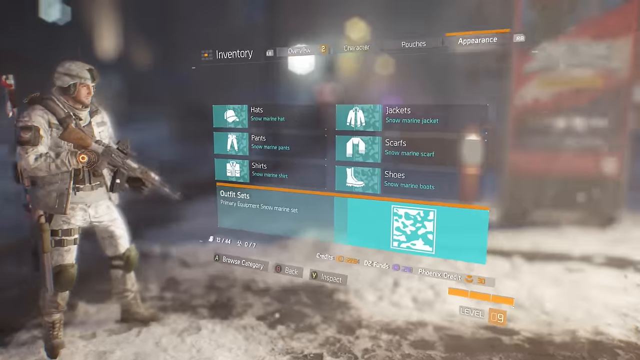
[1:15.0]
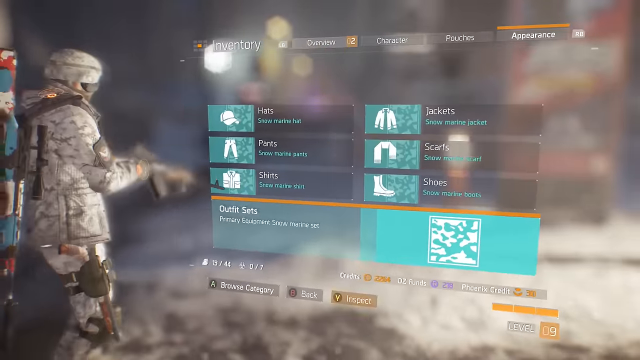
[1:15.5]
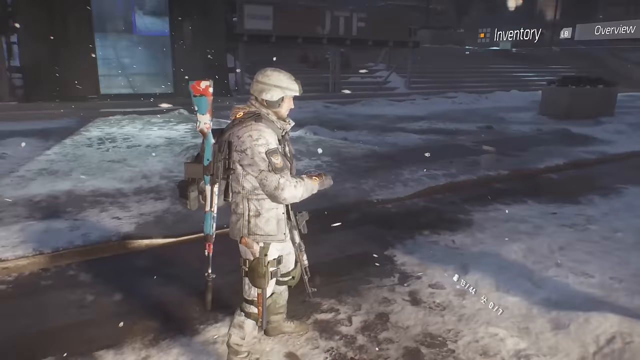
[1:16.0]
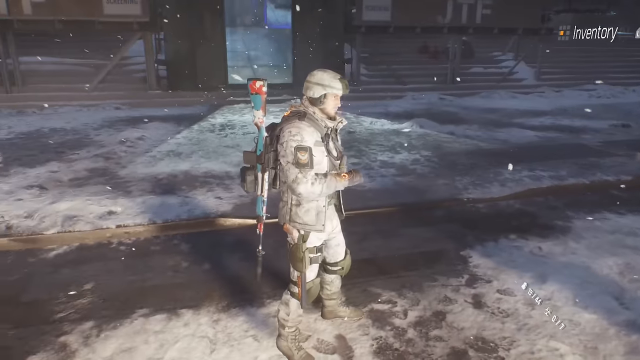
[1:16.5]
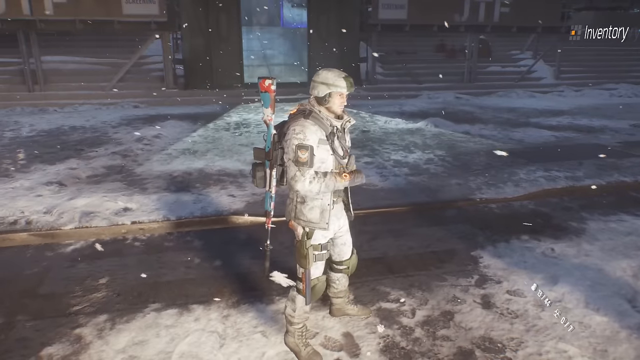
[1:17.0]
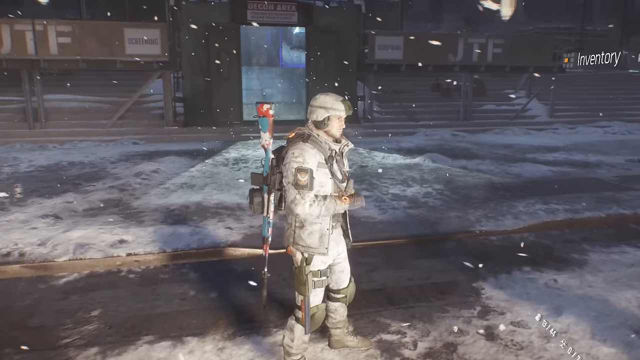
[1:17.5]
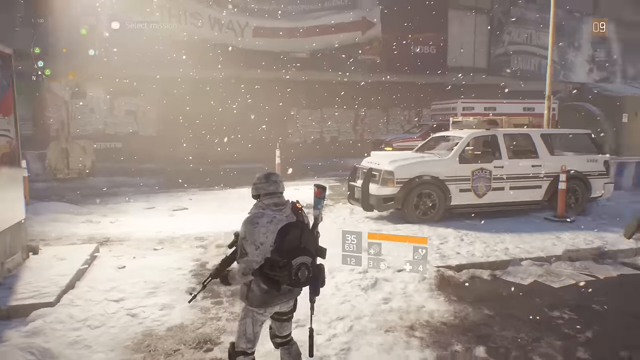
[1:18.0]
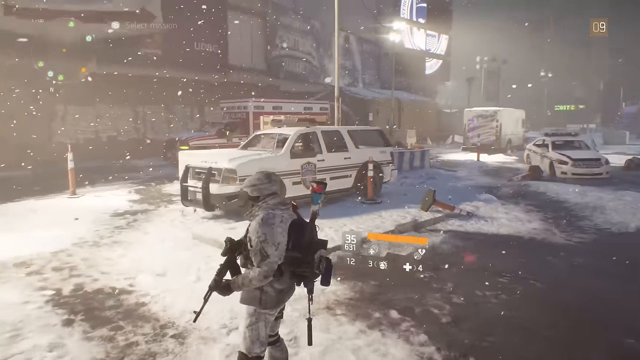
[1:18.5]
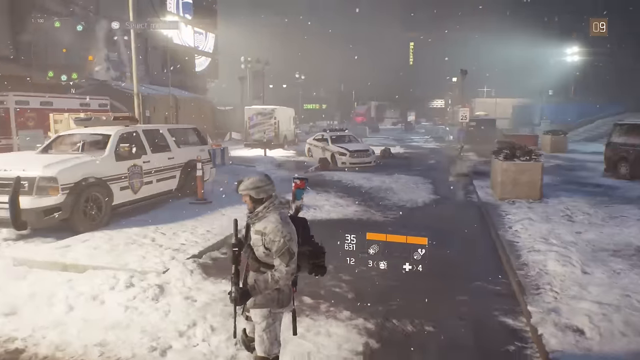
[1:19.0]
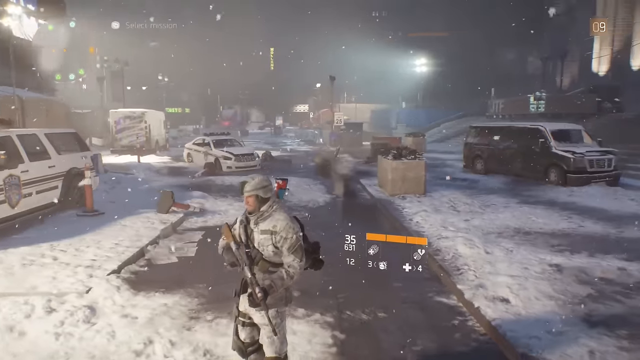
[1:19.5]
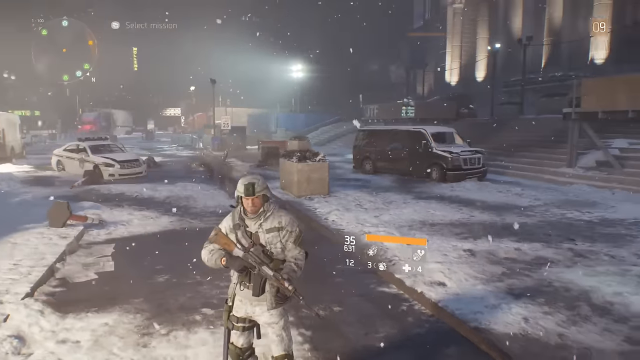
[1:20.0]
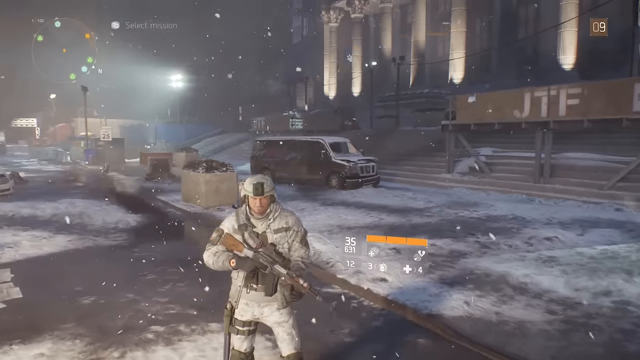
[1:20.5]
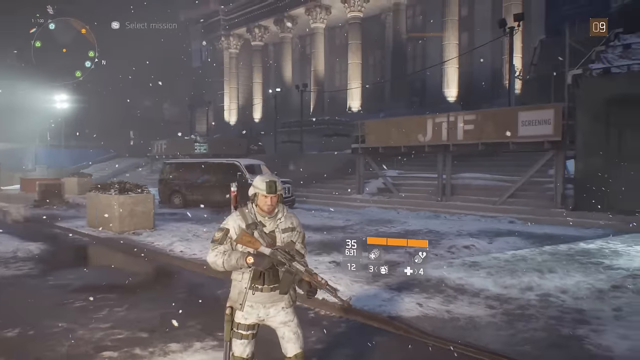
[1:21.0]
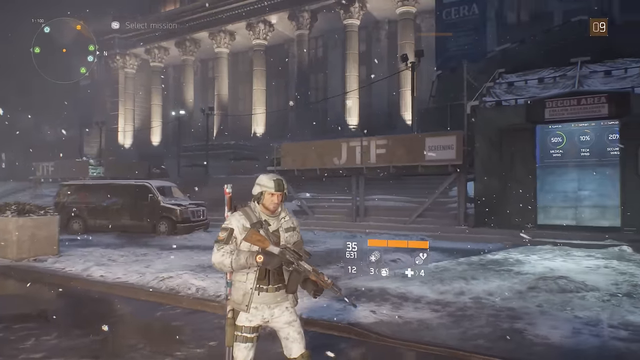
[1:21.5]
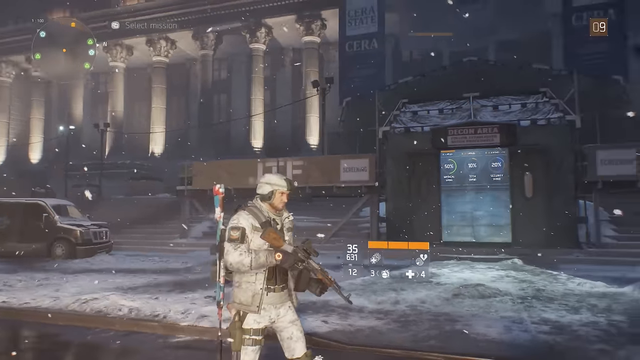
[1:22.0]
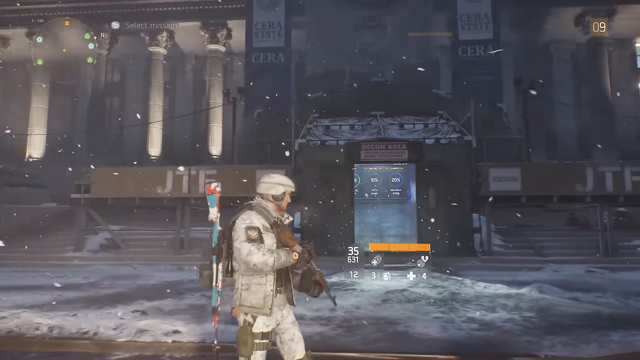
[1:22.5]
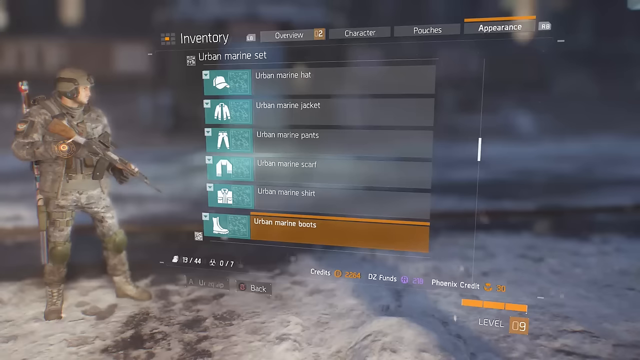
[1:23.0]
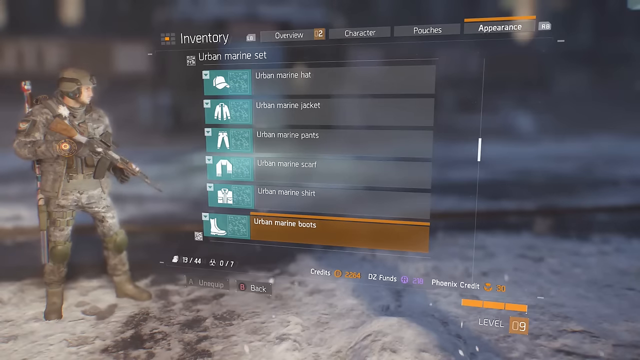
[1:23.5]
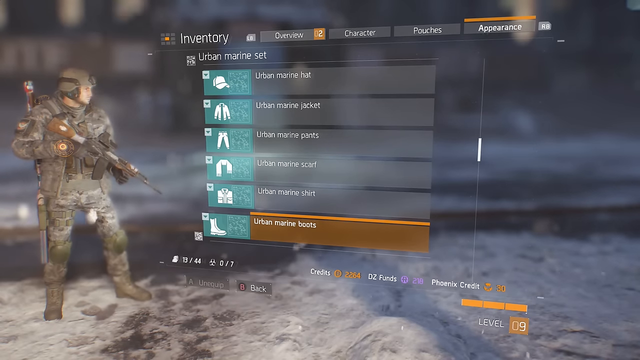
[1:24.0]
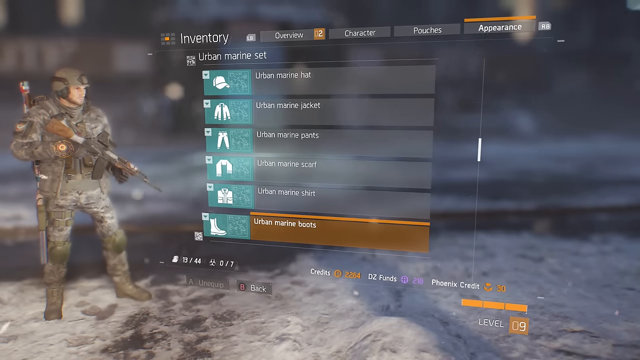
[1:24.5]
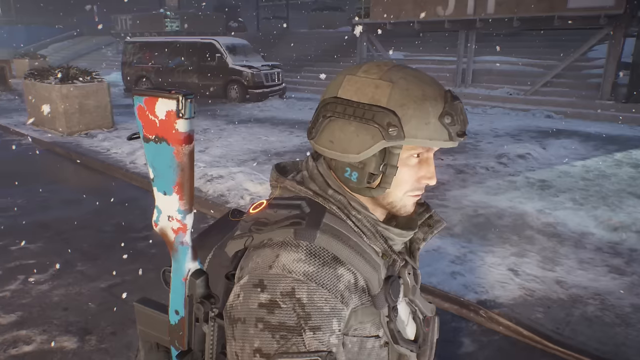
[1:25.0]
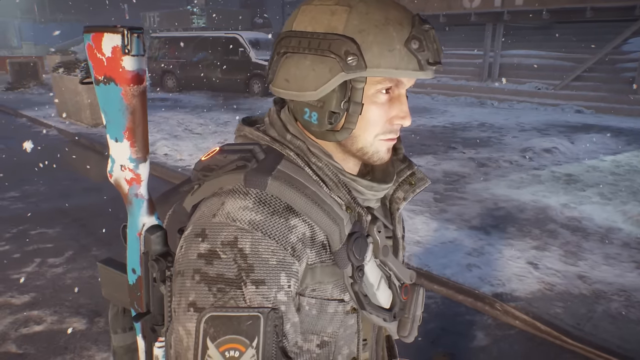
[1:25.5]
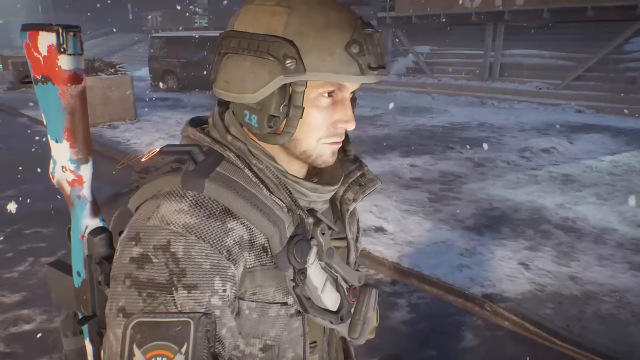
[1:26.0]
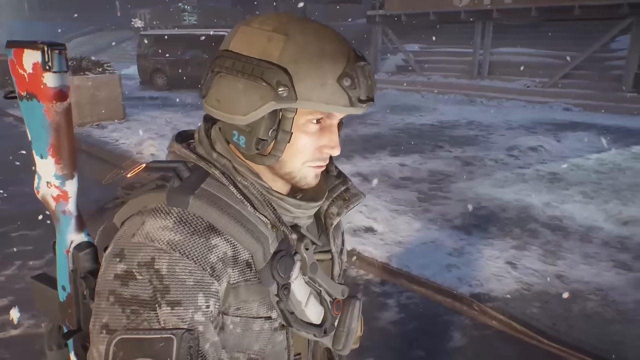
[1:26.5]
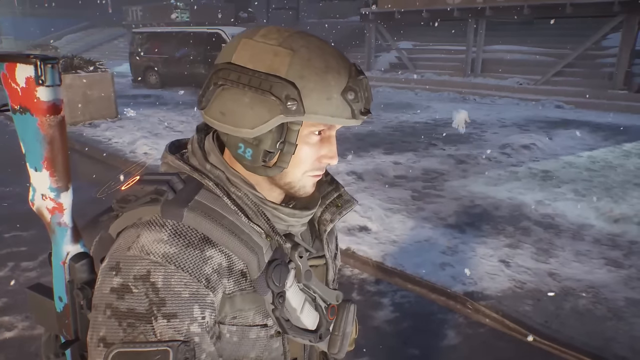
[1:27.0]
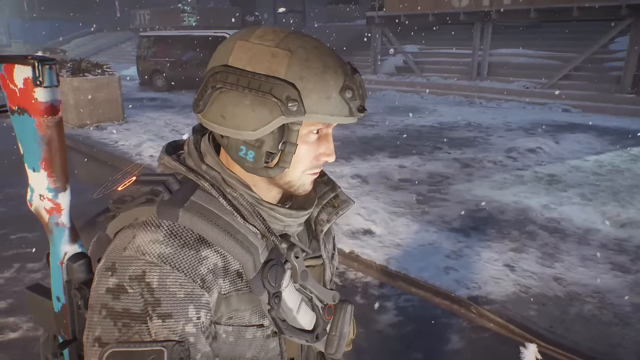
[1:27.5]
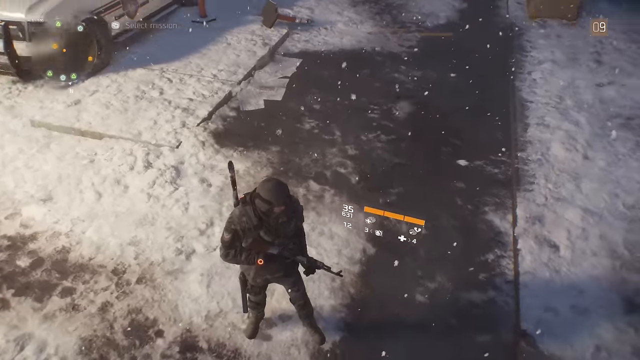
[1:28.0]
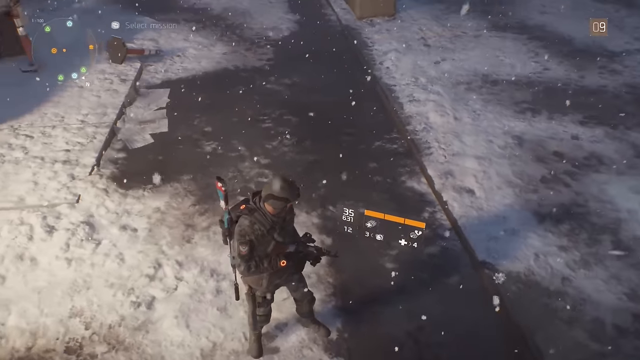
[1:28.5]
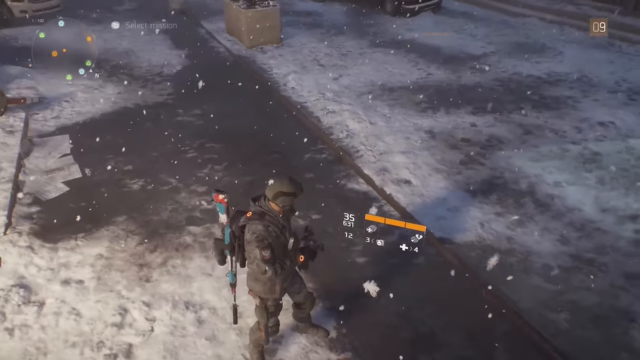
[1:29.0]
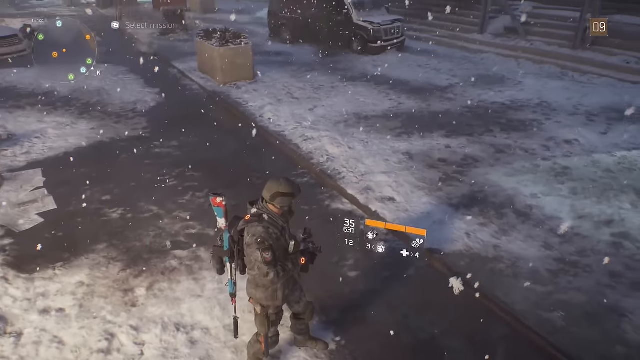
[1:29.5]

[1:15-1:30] A menu appears briefly, and then the character is seen. The camera scans around the character, who wears a full military outfit with a helmet. It is nighttime, and the menu comes back up with the clothing. A close-up shows the character's face: Caucasian with dark, scruffy facial hair. Their gun is red, teal and white with a little bit of black. It appears to be snowing, and steps are visible ahead. The camera pans over the top of the character to show the top of the helmet as it spins around. Pillars of a building are behind him, with lights kind of behind the pillars. To the right of the pillars is a doorway with a sign over it that appears to be red and white. Snowflakes fall through the air, and it appears to be snowing heavier.